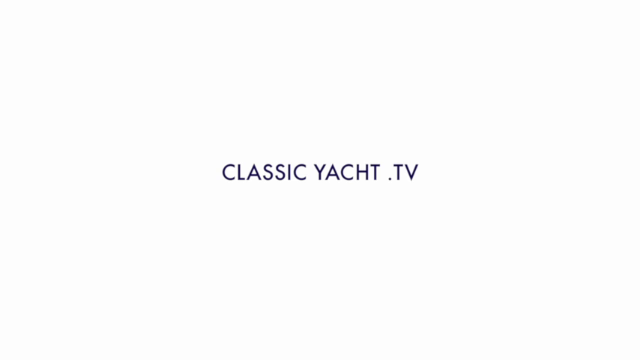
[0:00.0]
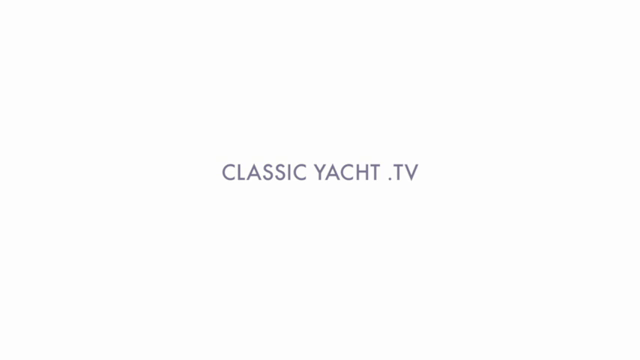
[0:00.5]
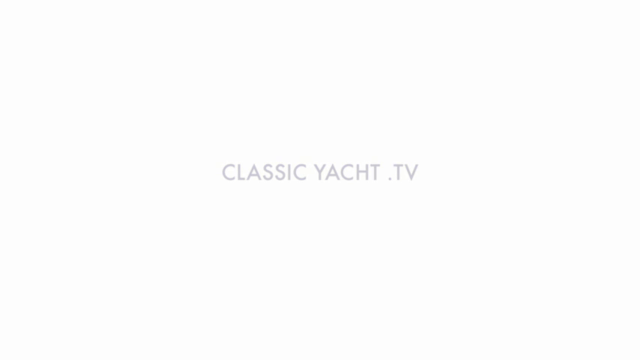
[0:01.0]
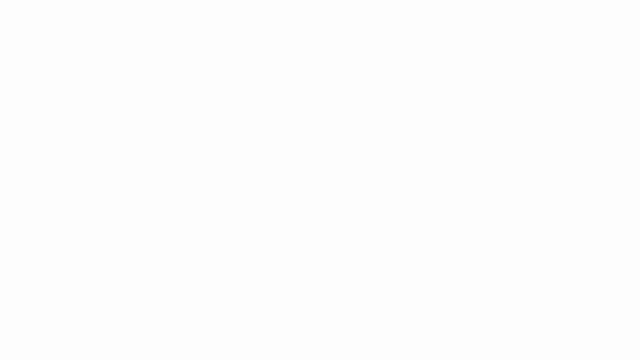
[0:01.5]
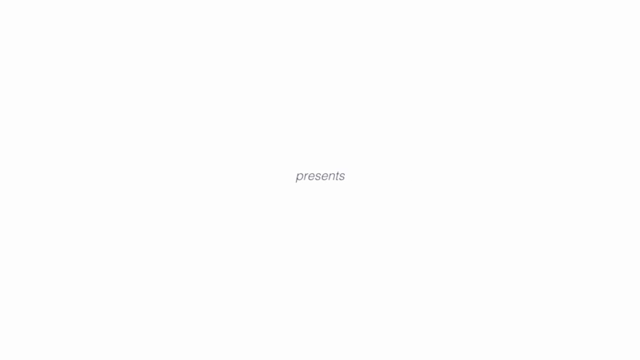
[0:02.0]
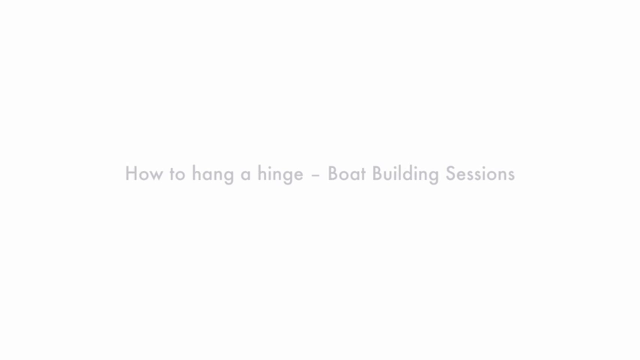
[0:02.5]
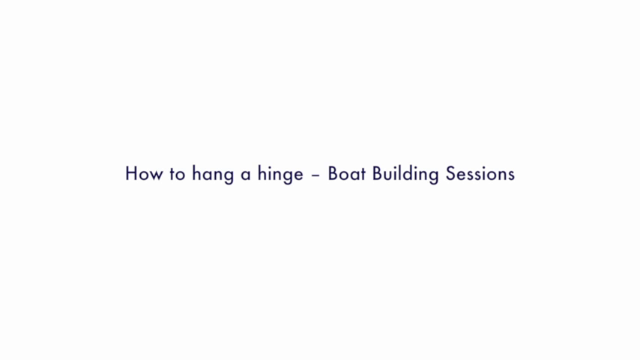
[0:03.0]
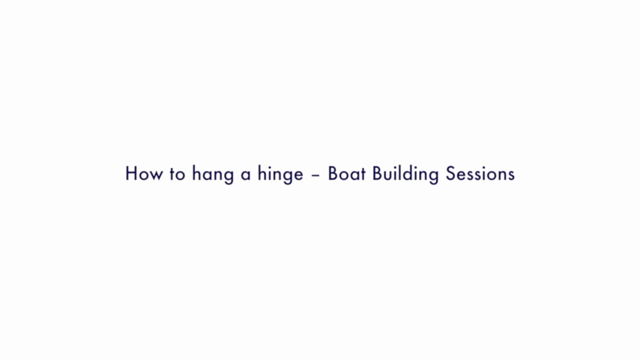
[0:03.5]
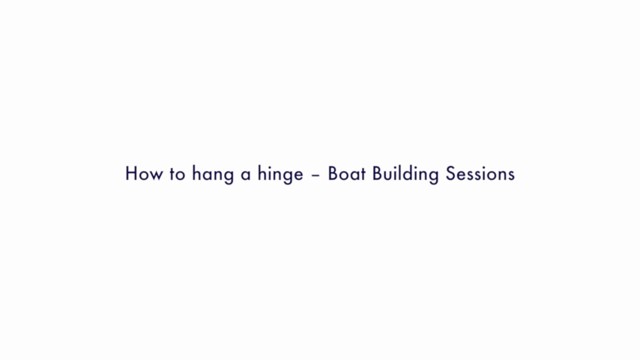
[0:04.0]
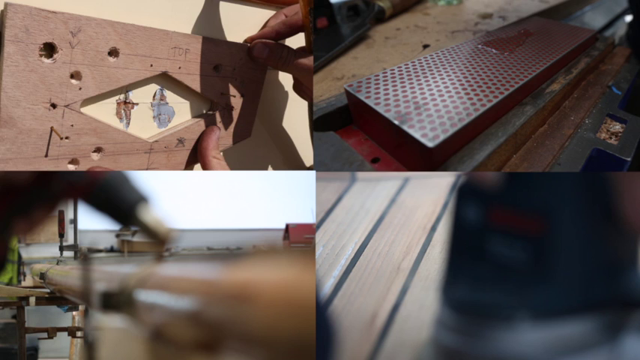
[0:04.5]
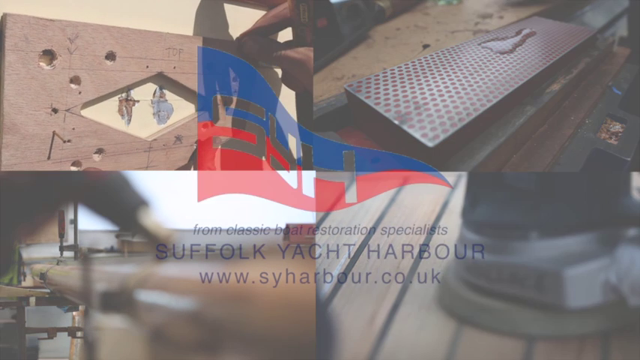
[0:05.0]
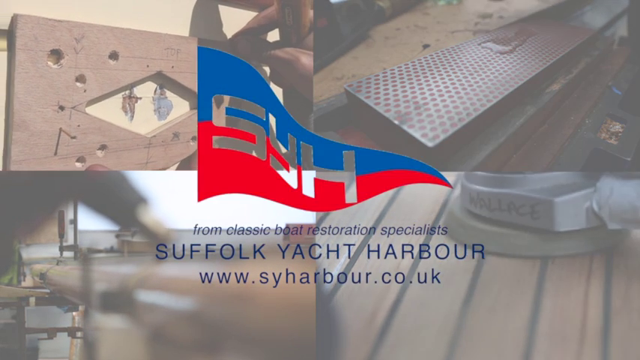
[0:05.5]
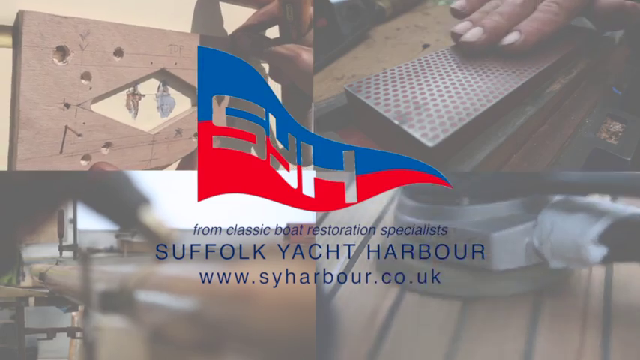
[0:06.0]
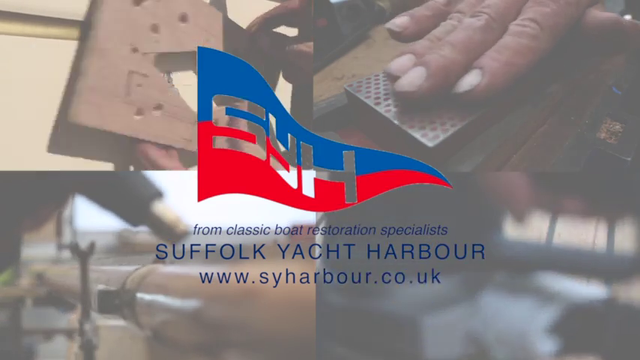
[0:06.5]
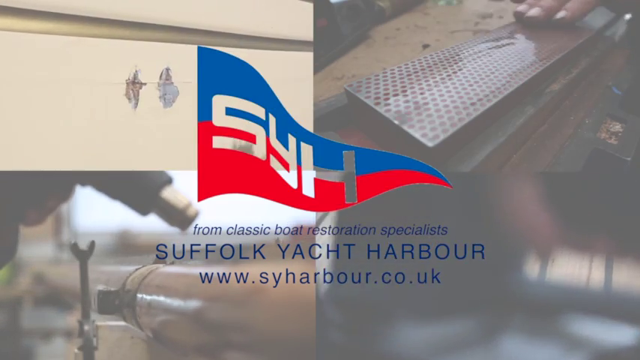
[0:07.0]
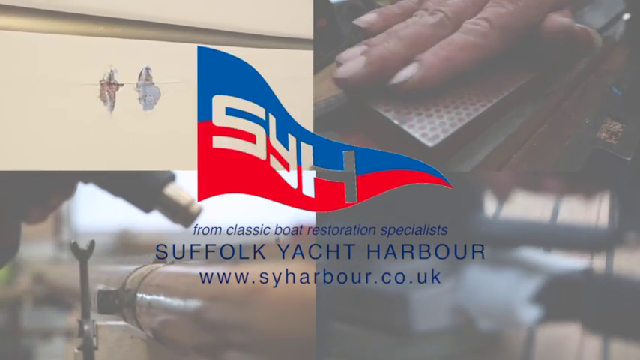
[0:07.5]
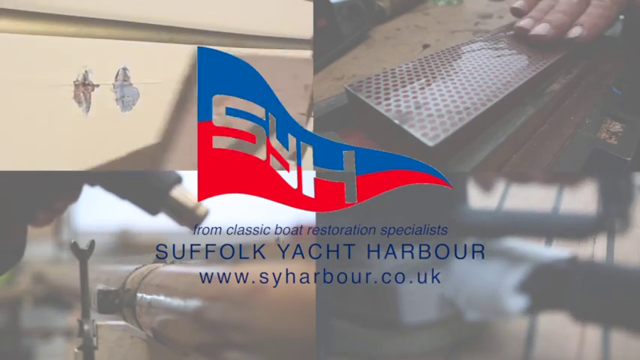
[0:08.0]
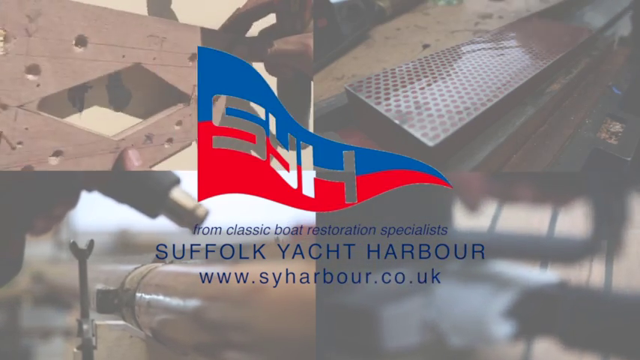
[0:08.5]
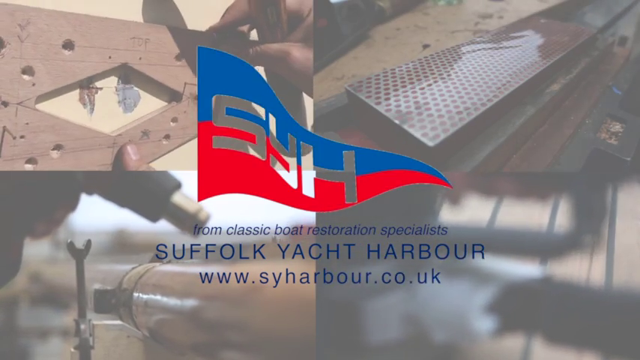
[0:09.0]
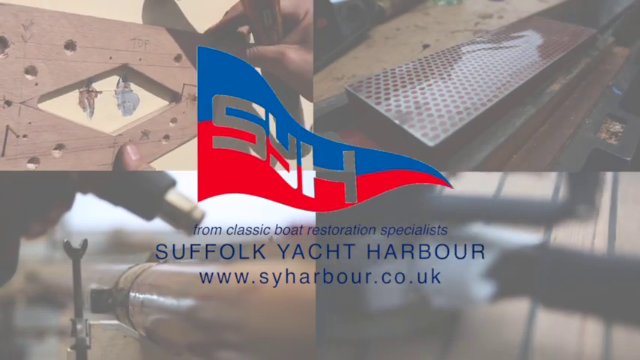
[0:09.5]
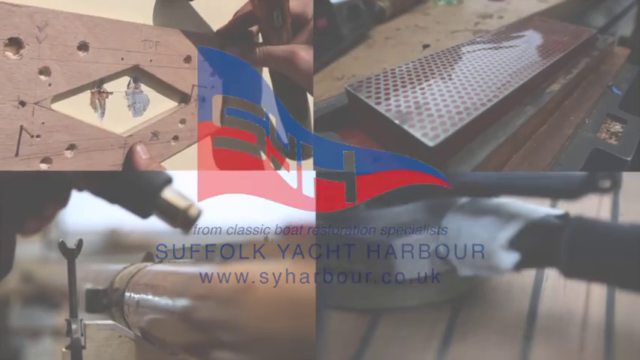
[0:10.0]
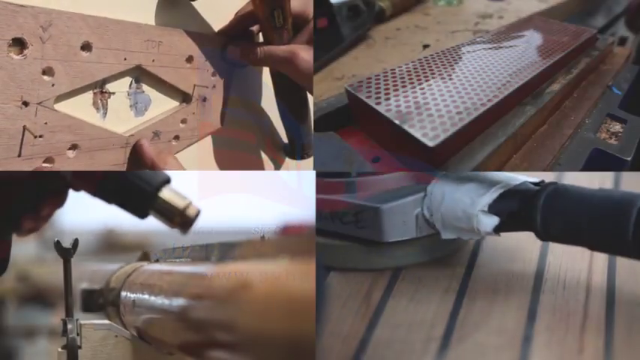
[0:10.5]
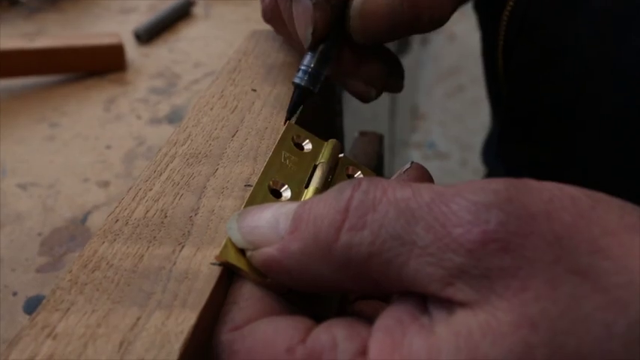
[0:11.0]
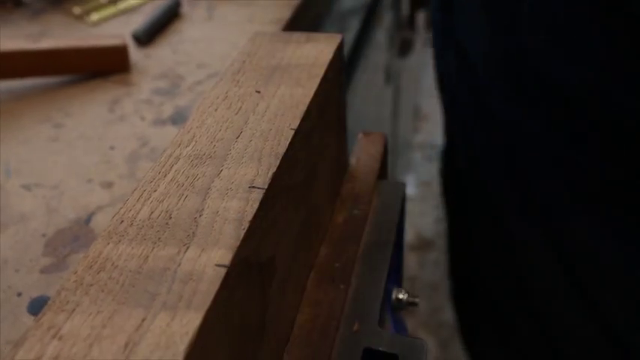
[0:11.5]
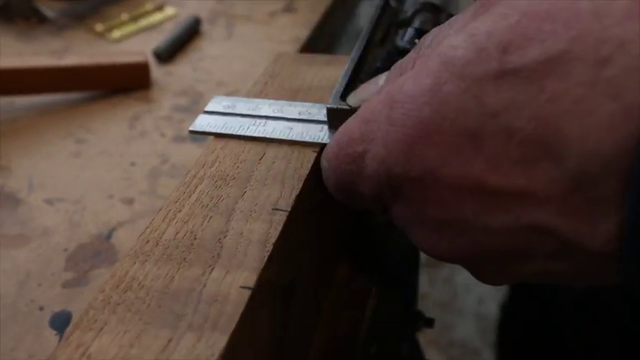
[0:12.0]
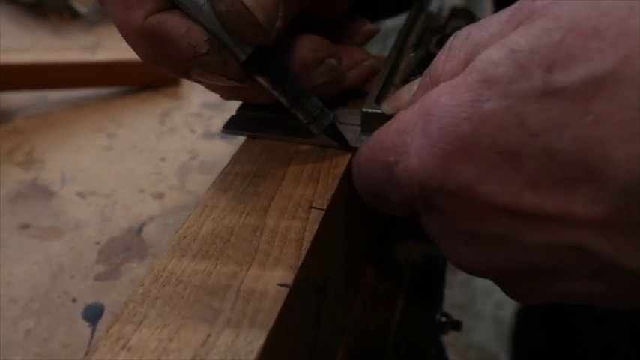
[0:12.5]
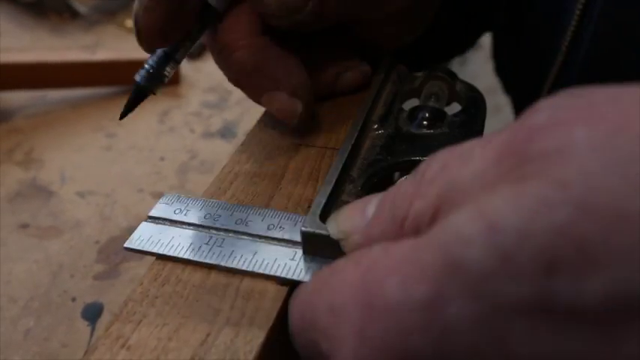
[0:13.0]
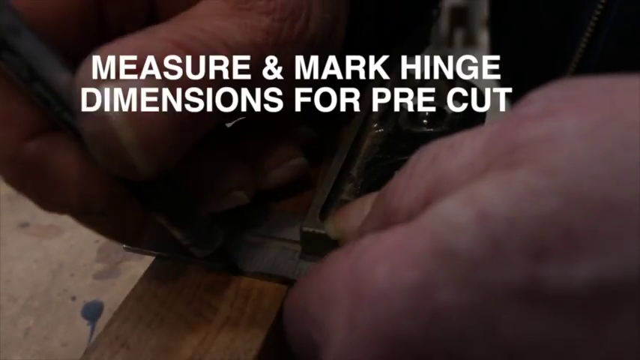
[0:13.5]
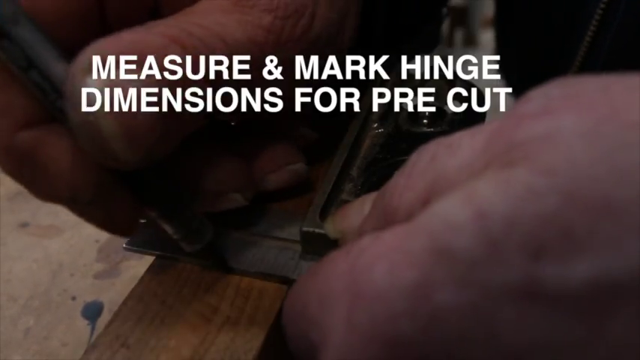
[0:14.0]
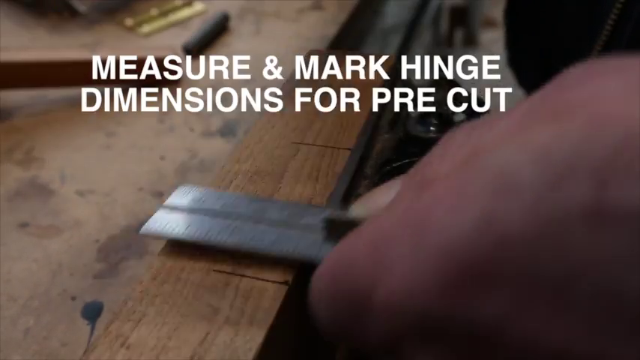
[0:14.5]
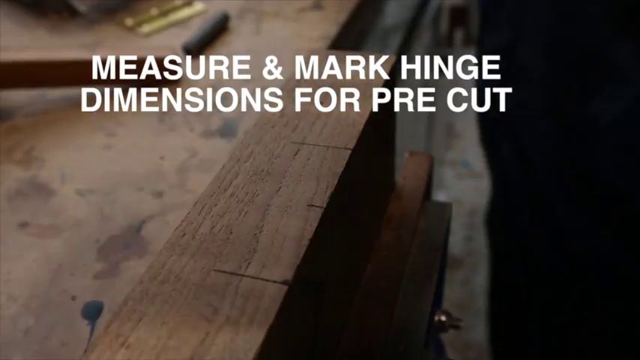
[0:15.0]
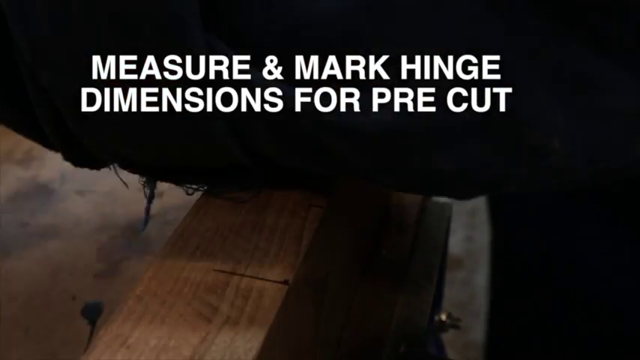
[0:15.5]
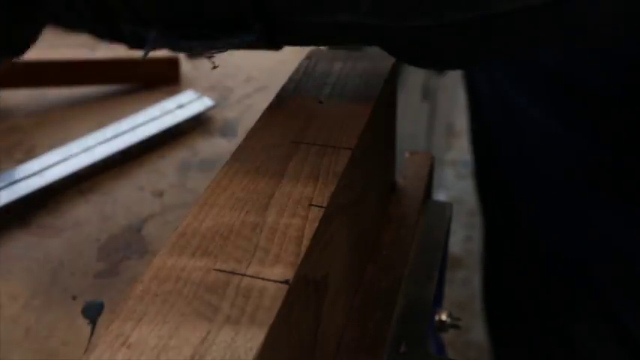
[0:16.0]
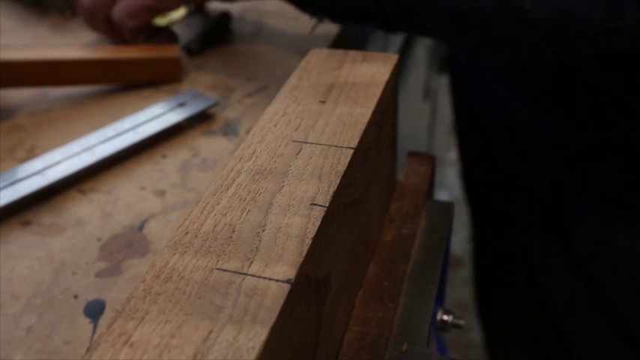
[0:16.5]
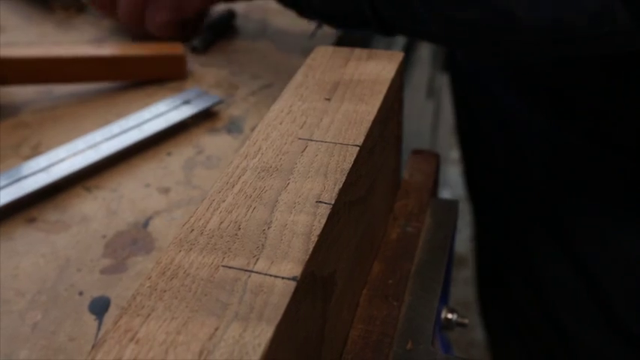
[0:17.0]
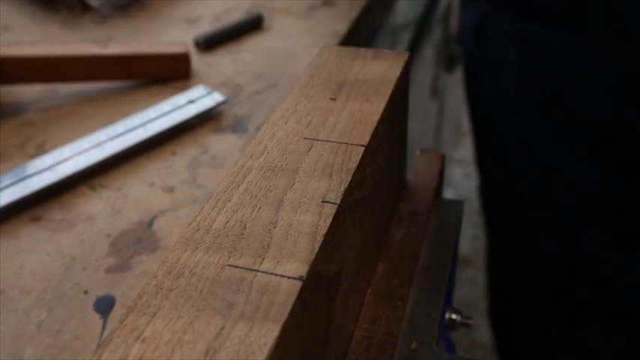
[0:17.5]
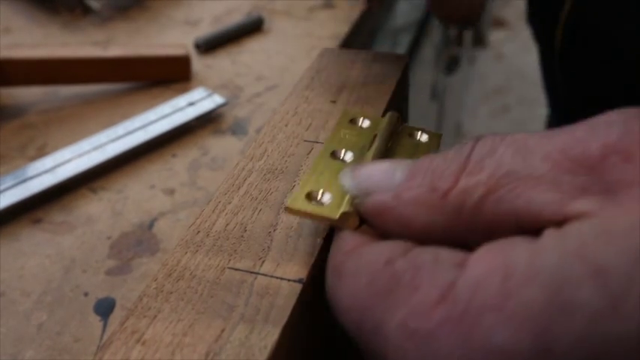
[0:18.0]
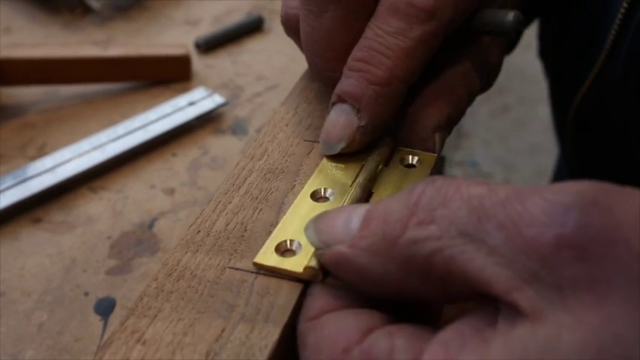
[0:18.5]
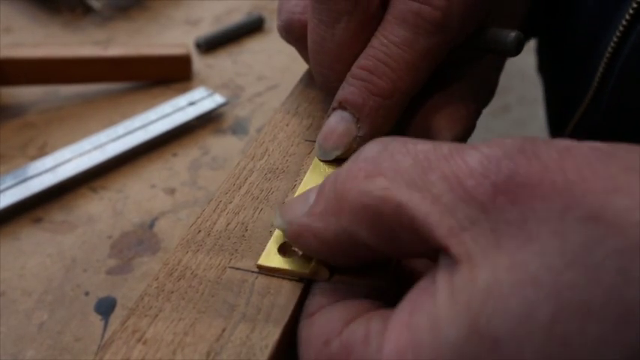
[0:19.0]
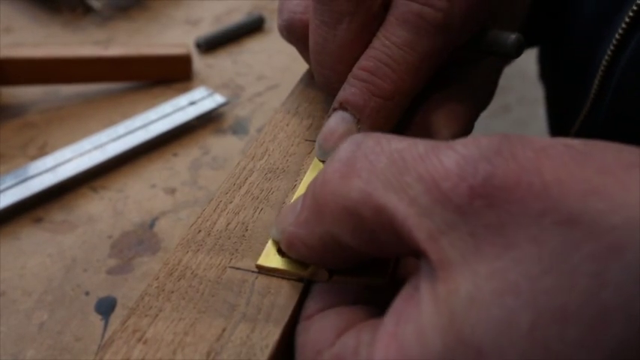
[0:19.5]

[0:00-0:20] The video opens with a title moving across the screen that reads "ClassicYacht.TV" on a white background, with the area below it a little dark, as if casting a shadow. Text across the screen reads "How to hang a hinge, boat building sessions." Next, four windows appear, each showing a different activity. In the window on the left, some type of panel is being hung on a wall. A window on the right seems to show a person working on some other object, and another shows a person holding some type of tool. Something is happening in the bottom-right window that is hard to see, though wooden planks are visible underneath. Text in the middle reads "From classic boat restoration specialist, Sofolk Yacht Harbor," followed by a website. Work is then shown: someone takes measurements and puts on a hinge.